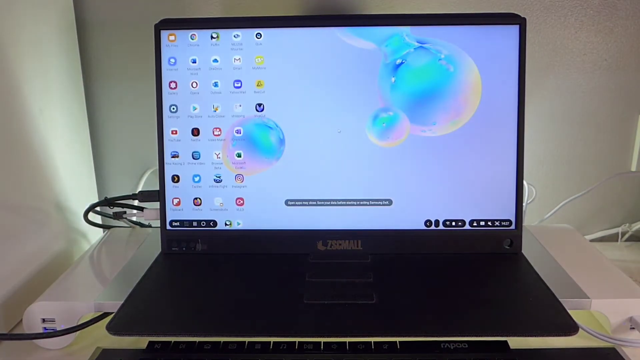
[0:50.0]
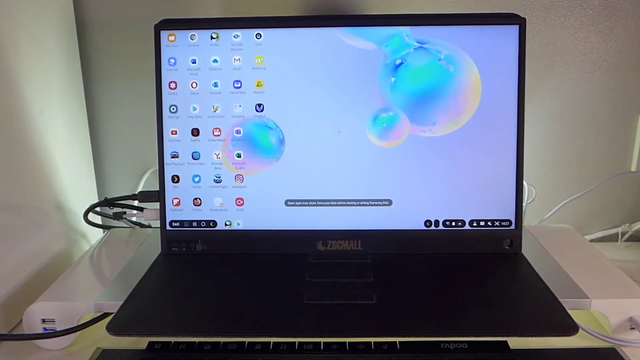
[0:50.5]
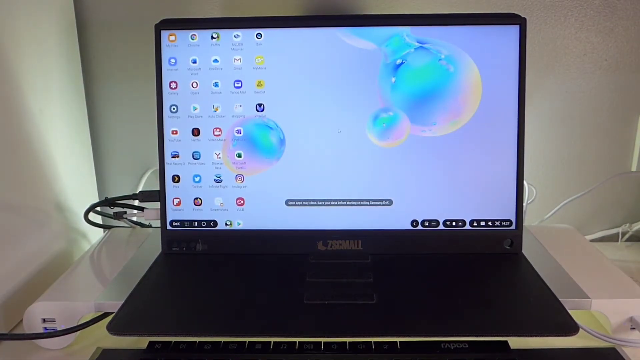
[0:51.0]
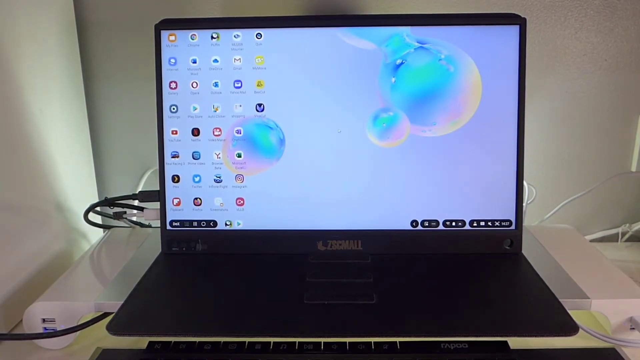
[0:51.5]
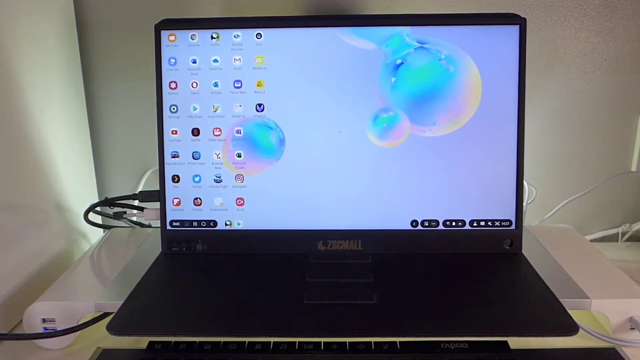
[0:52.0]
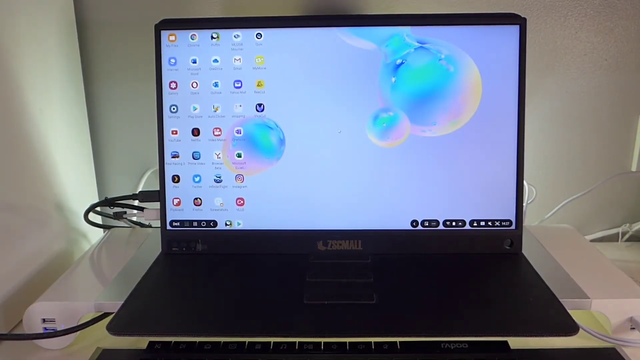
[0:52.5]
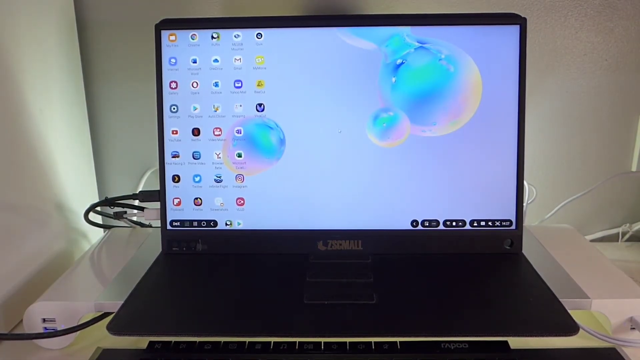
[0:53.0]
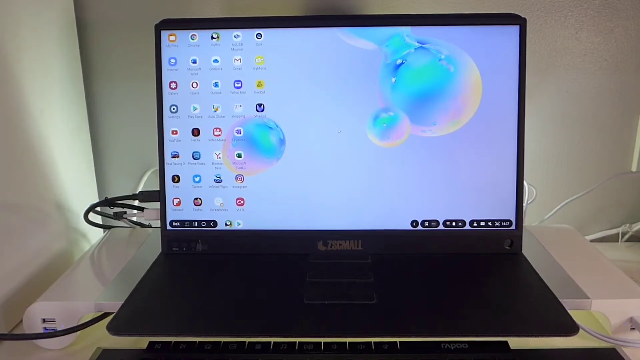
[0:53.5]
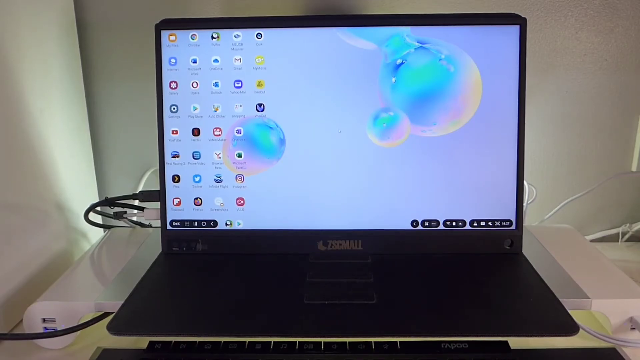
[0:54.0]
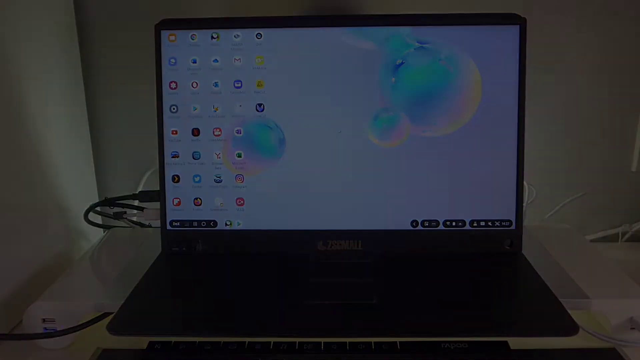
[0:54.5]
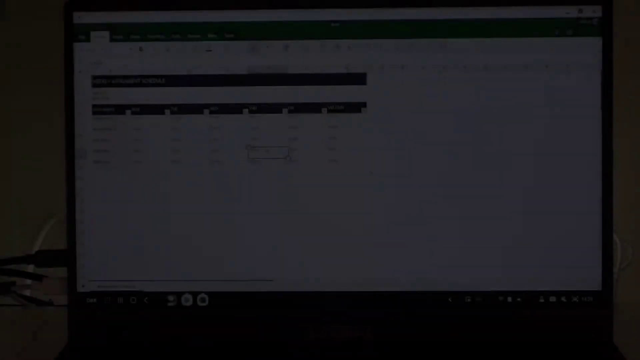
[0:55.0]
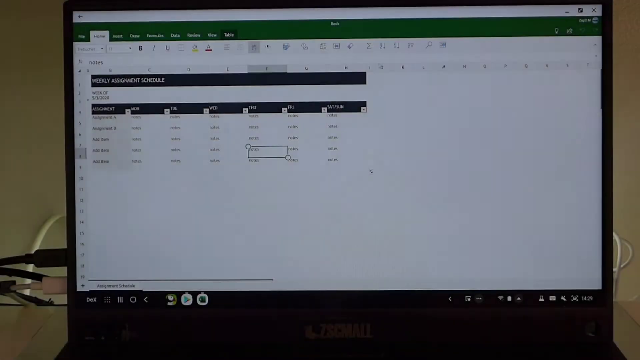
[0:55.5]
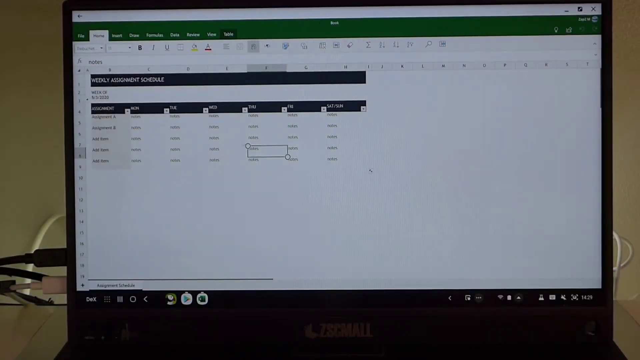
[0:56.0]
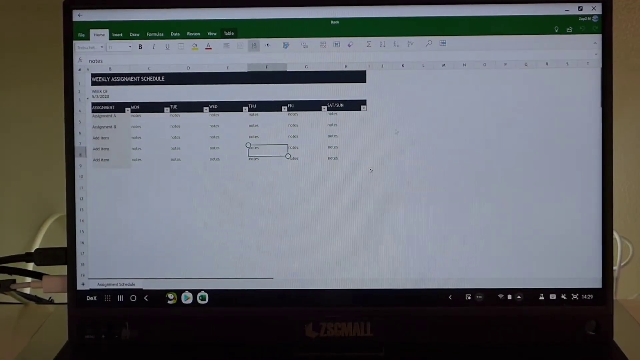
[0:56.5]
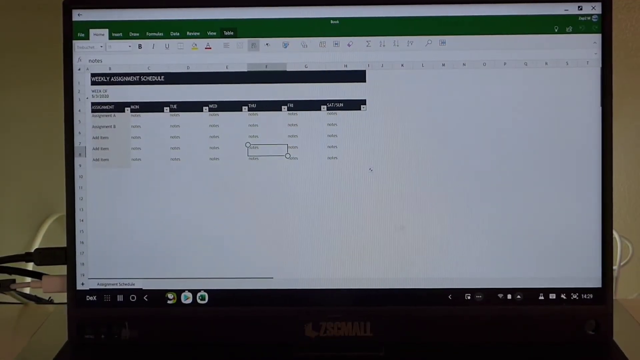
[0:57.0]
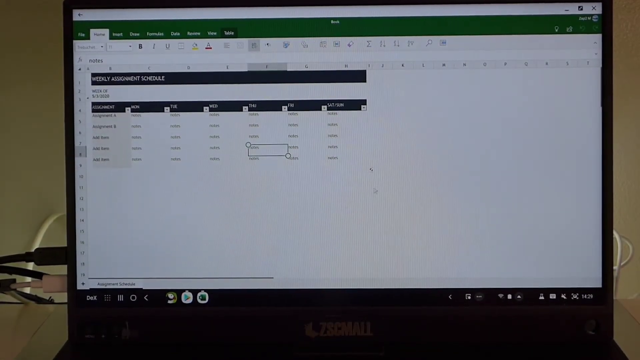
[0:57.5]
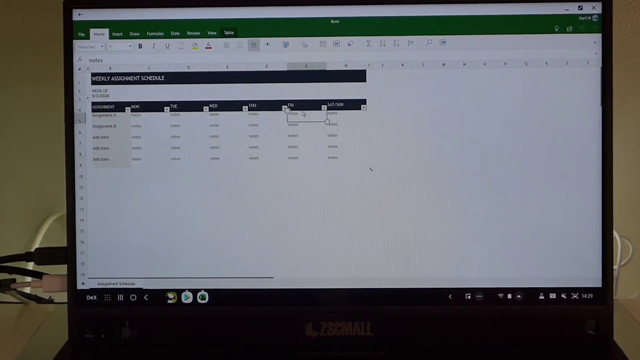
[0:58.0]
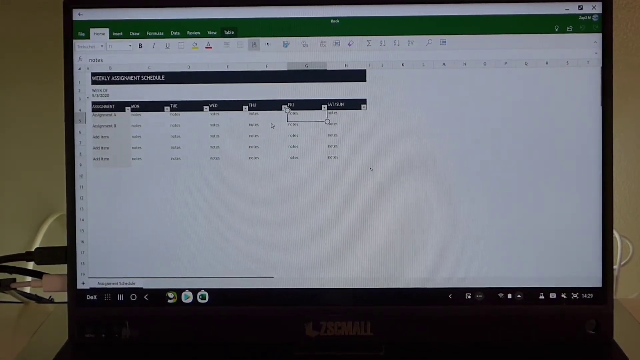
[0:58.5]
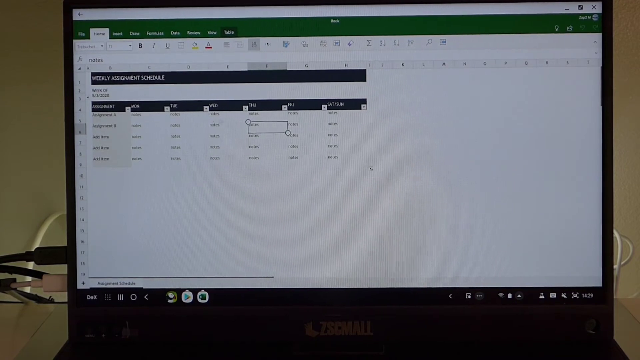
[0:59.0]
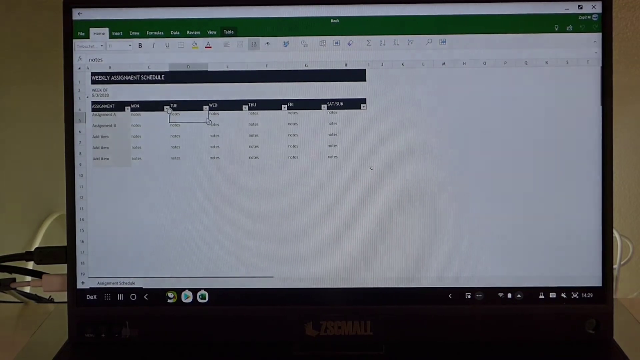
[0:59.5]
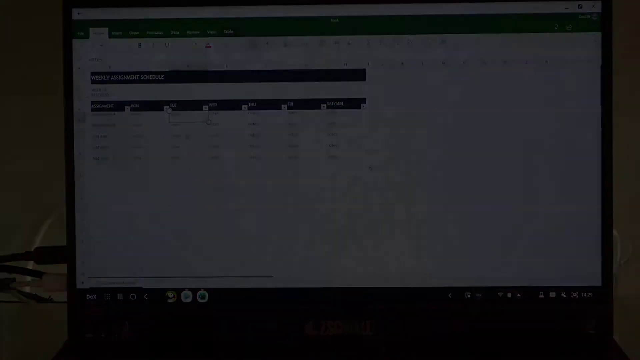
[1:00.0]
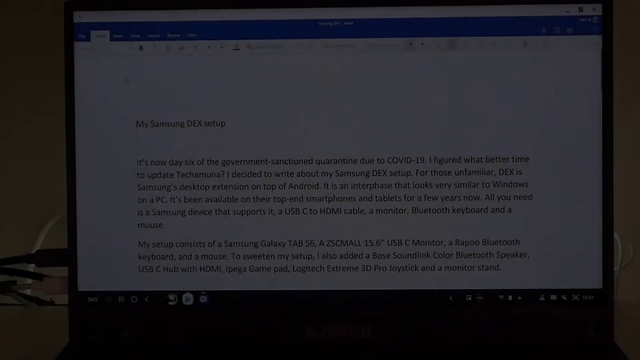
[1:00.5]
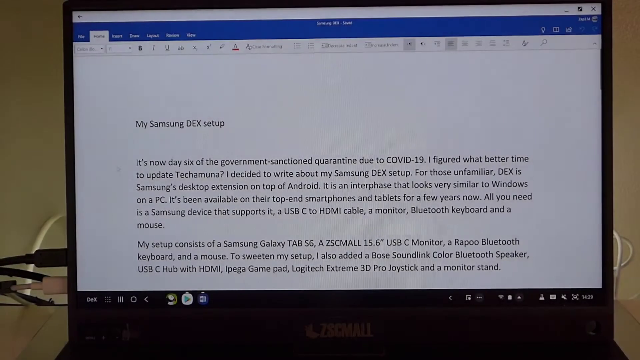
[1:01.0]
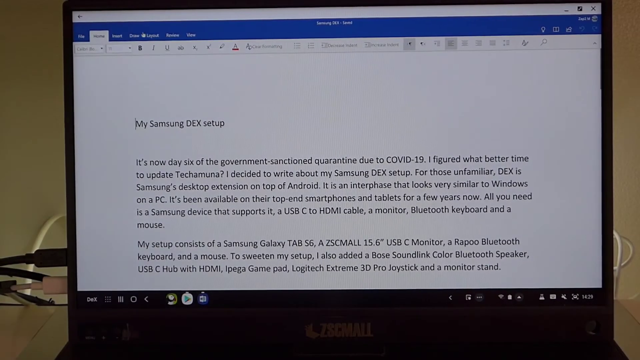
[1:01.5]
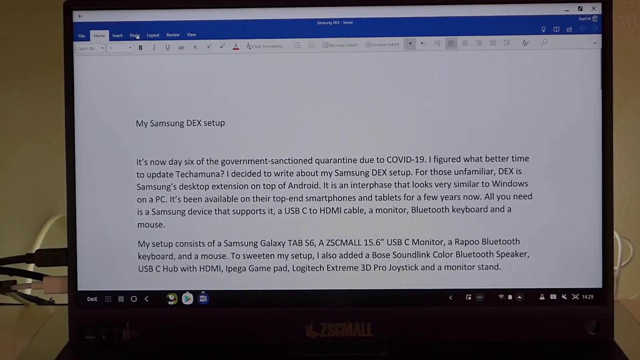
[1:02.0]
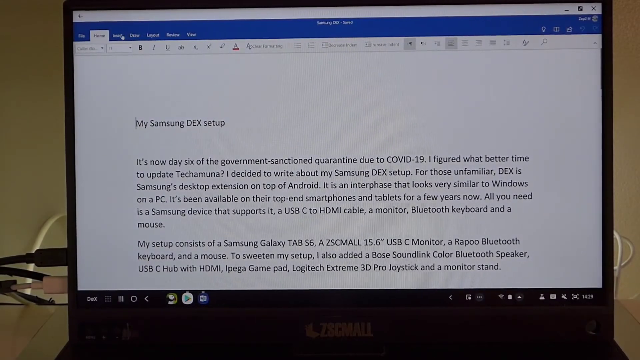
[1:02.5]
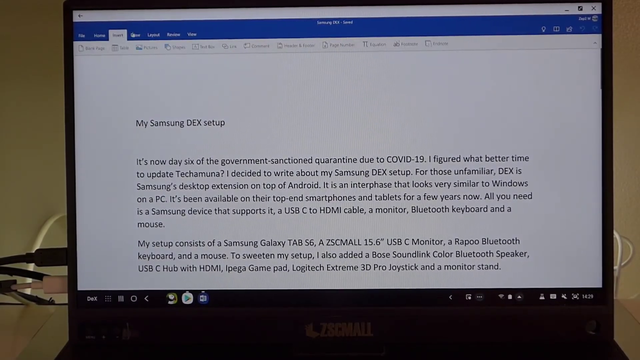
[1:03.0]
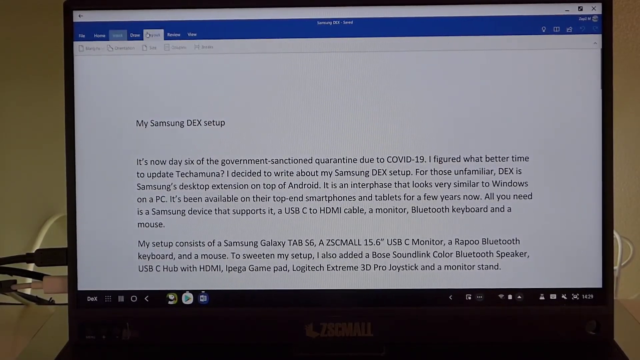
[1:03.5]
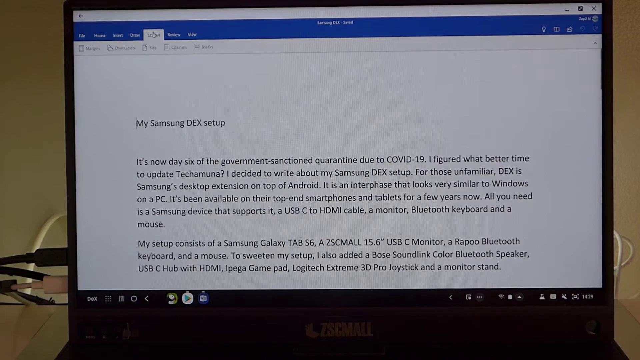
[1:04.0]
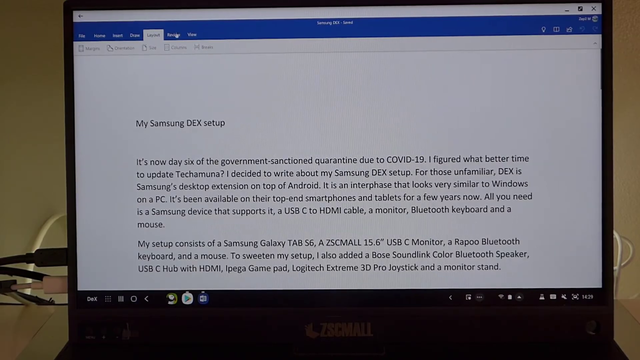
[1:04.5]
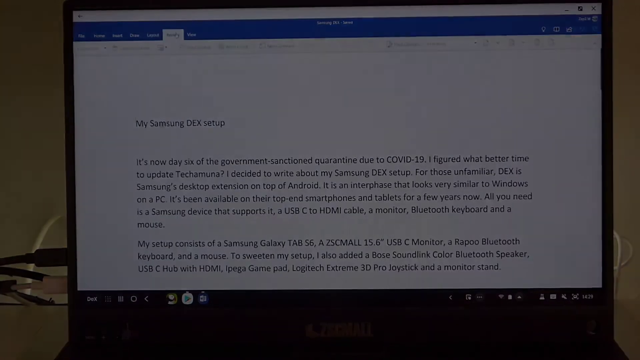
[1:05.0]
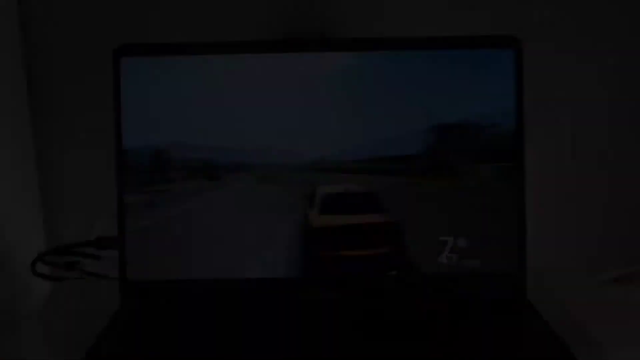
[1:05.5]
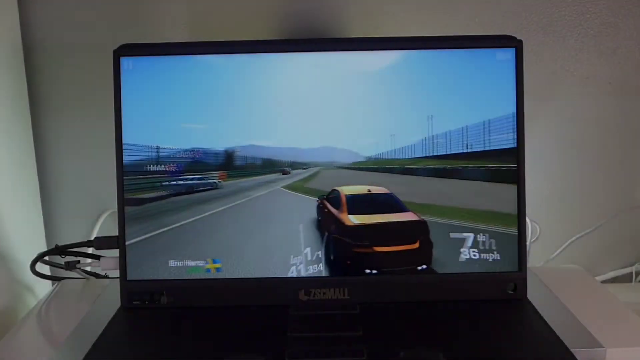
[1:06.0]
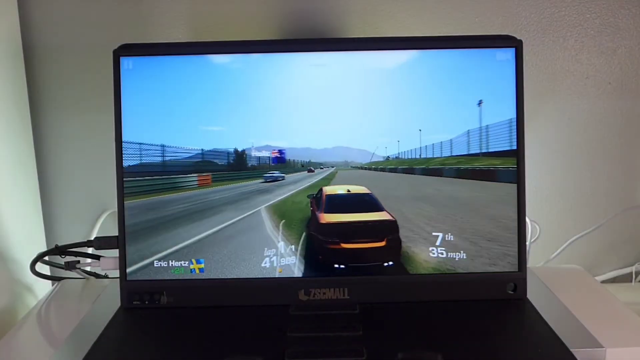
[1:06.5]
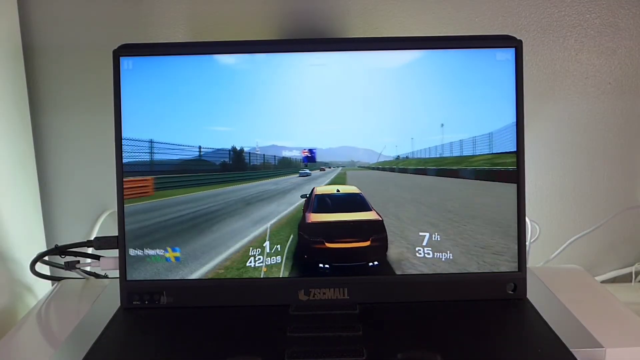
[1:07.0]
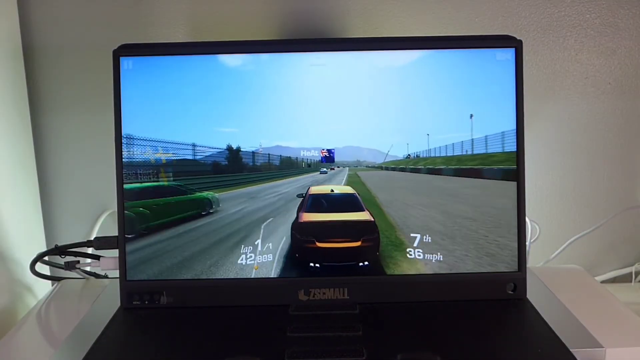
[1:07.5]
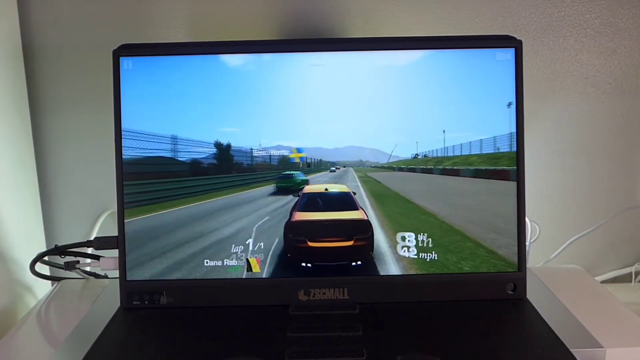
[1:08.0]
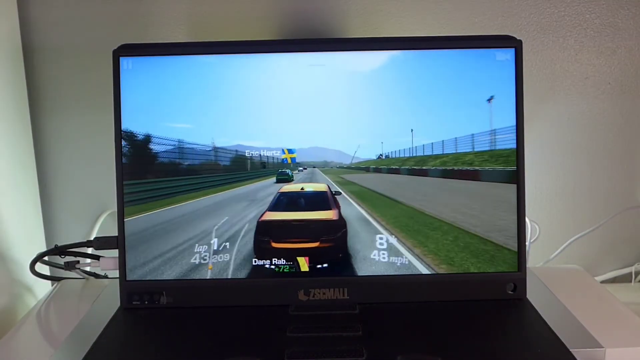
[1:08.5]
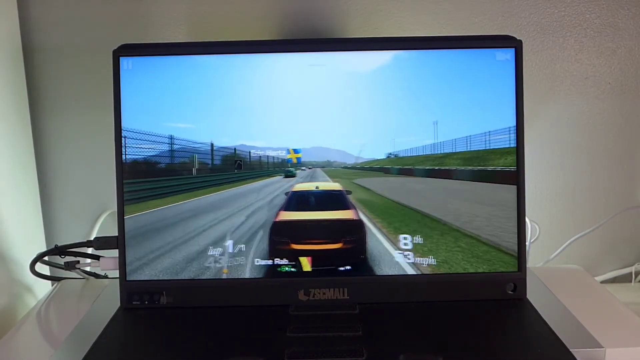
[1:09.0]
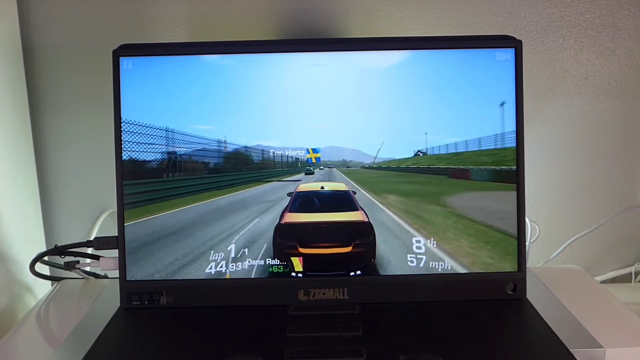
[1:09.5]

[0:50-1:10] The video starts looking dead on at what appears to be maybe a tablet with a black bezel and an illuminated screen. The desktop screen shows five columns of icons, with a bunch of black-and-white control graphics in the lower left and right. A brand in light gray text at the bottom looks like "Z SC Mall". A bunch of wires come off the left-hand side. The shot fades out and fades back in more zoomed in on the screen, which fills the majority of the frame, though a little of the wires is still visible in the lower left corner. The screen shows what appears to be a spreadsheet, likely Excel, with Excel green at the top; its details cannot be made out. That fades out and fades back in on what looks like Microsoft Word, perhaps, with blue at the top and a few paragraphs at the bottom, while someone clicks some things. Then the screen shows a racing video game with an orange truck in the center.